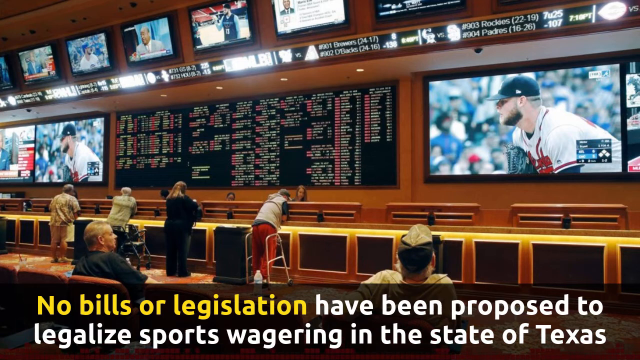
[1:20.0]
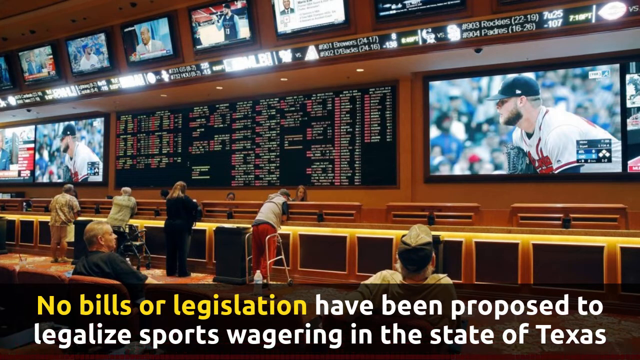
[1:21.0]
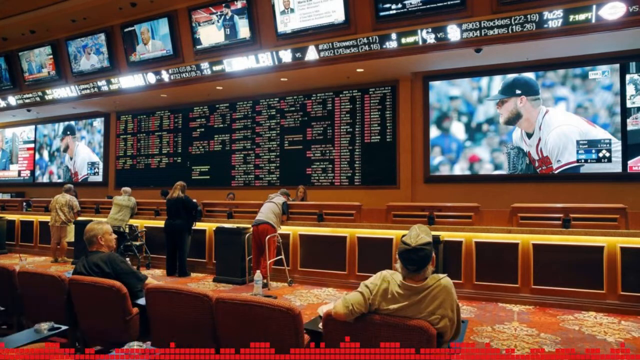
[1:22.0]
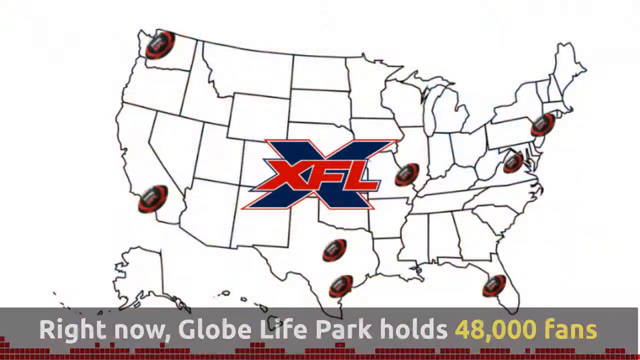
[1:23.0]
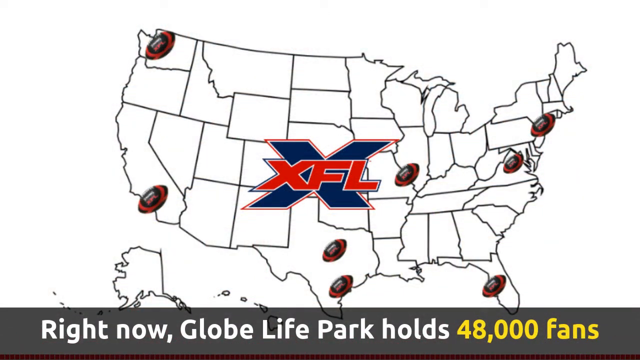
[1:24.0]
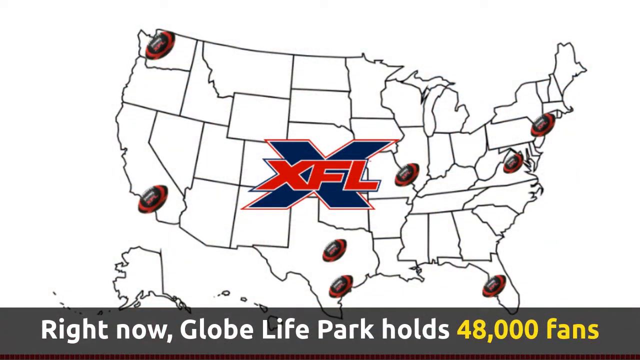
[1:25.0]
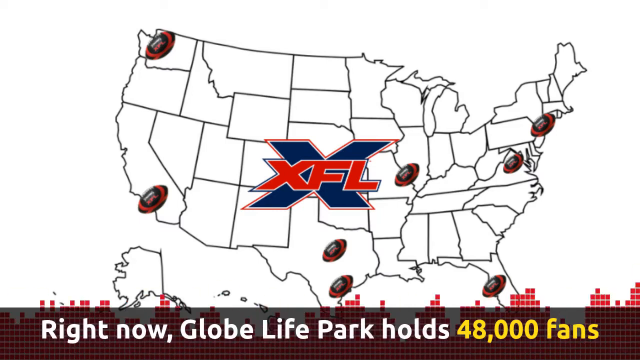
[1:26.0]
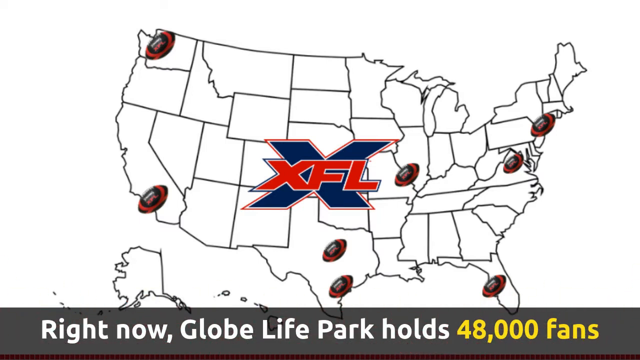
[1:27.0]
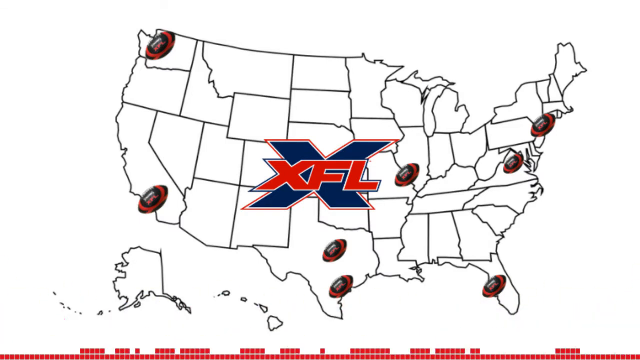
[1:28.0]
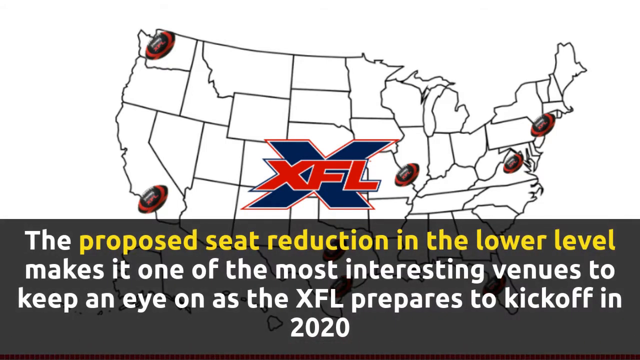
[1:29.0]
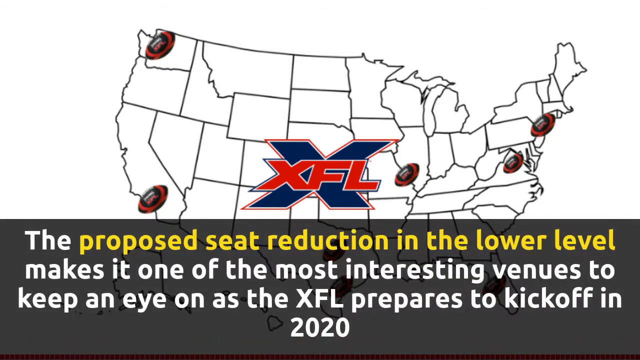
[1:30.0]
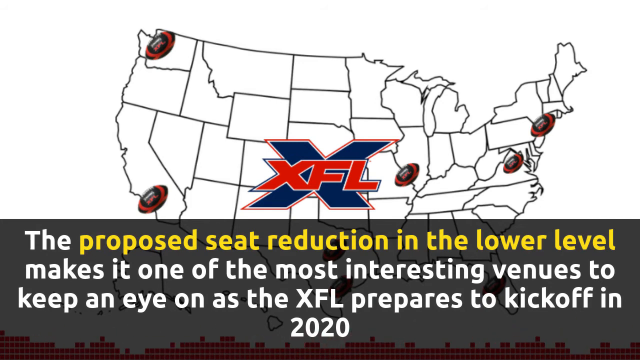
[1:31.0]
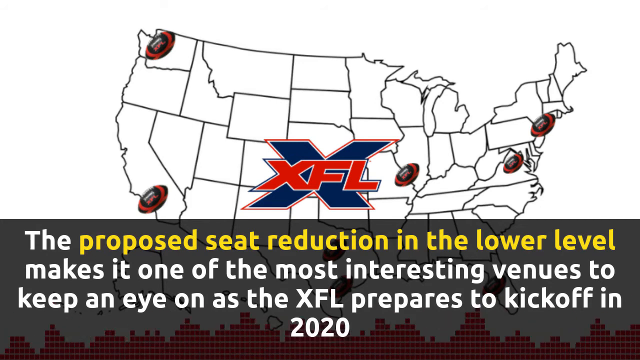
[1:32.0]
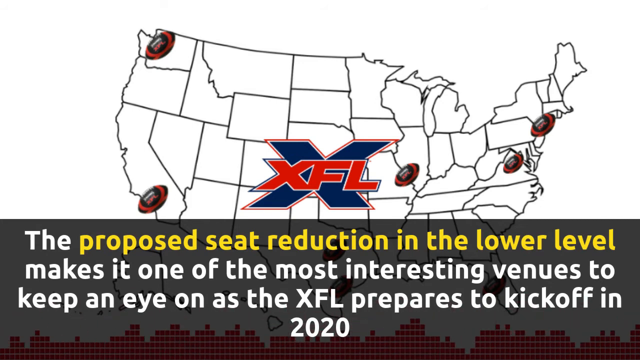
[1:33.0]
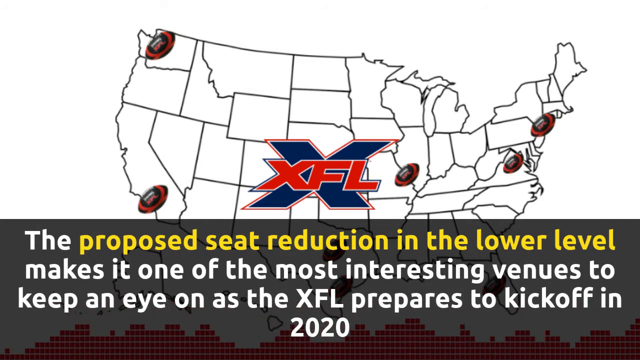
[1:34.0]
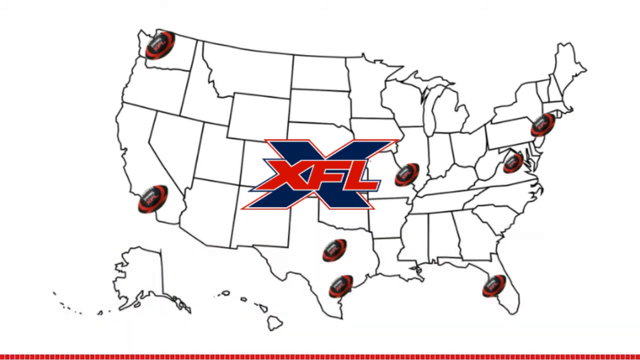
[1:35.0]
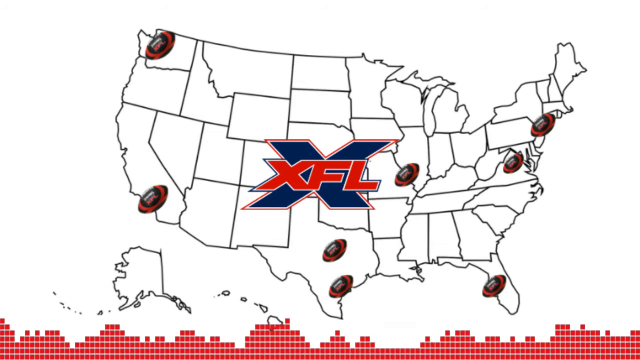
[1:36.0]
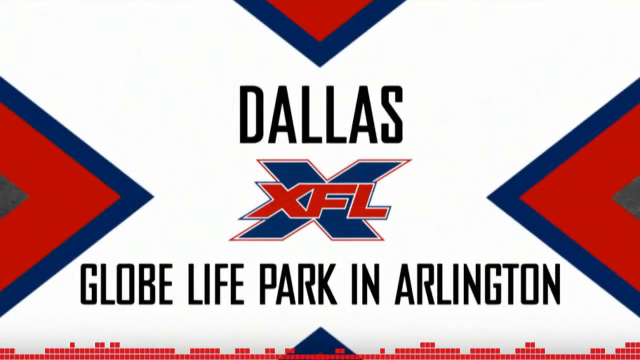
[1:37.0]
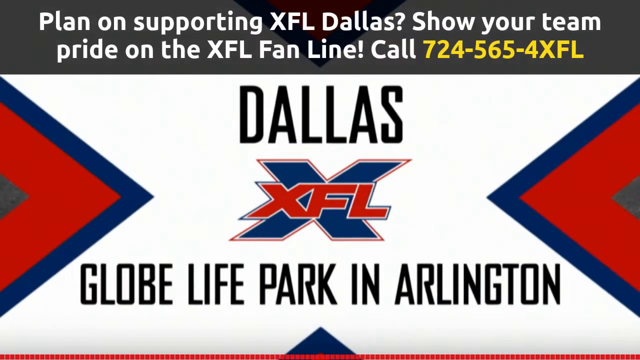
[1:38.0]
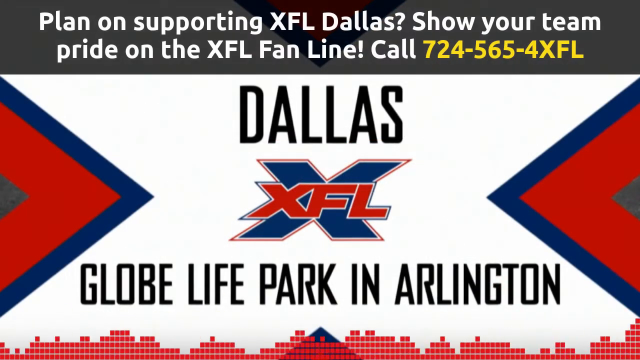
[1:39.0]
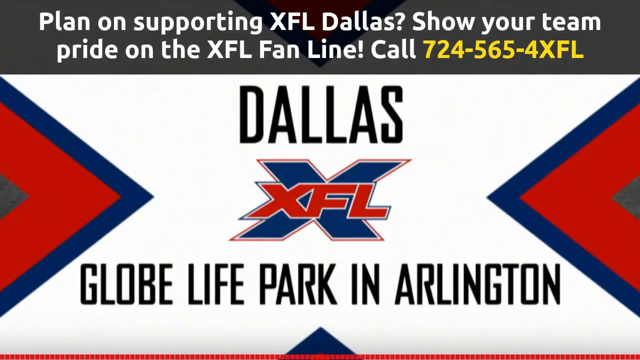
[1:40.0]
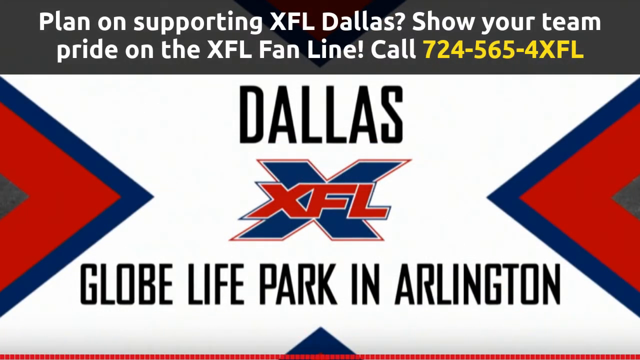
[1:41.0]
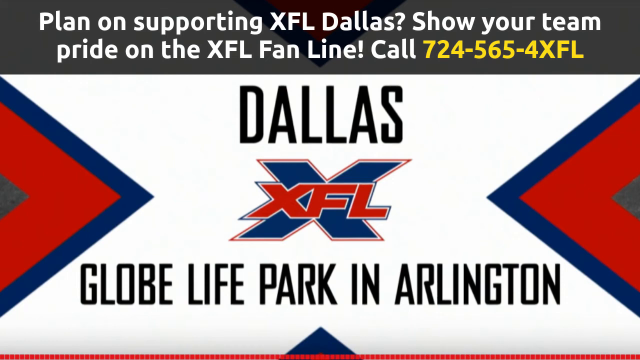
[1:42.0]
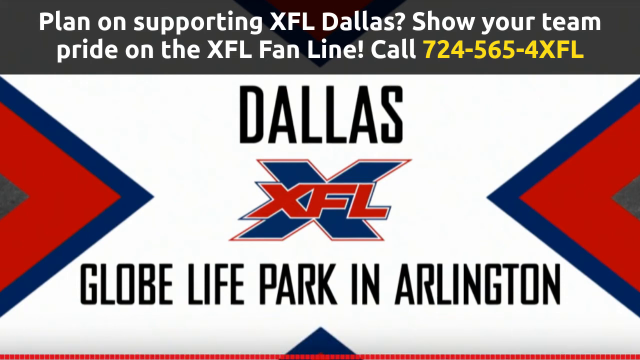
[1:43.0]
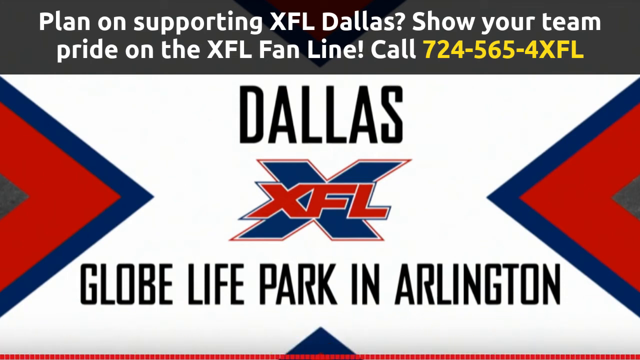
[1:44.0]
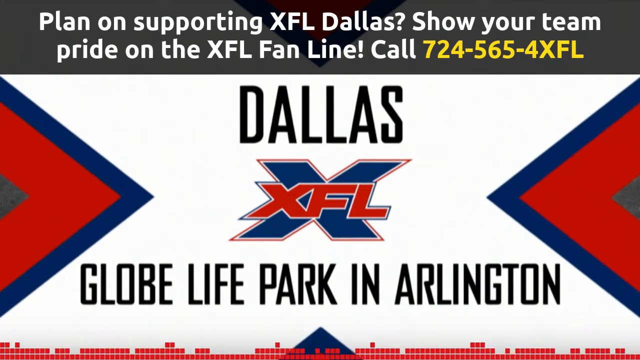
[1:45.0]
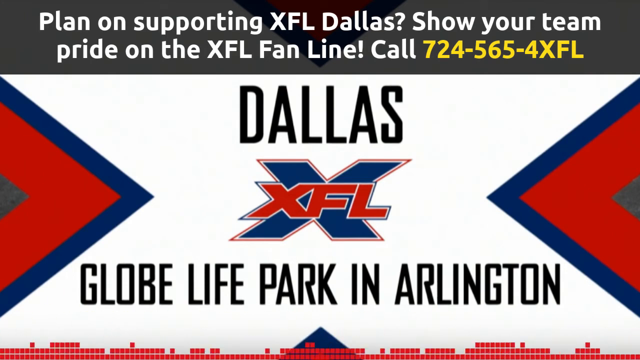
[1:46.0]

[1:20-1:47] The view returns to the bookmakers, where people are gambling on sports. It then cuts to a map of the 50 states of the United States showing eight announced XFL franchises: two in Texas, in Dallas and Houston; what looks like one in LA, California; one in Seattle, Washington; one in the New York/New Jersey area; one in the Washington, D.C. area; one around the border between Missouri and Illinois; and one in West Florida.